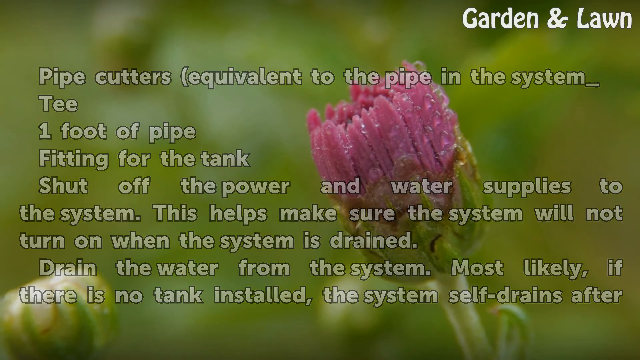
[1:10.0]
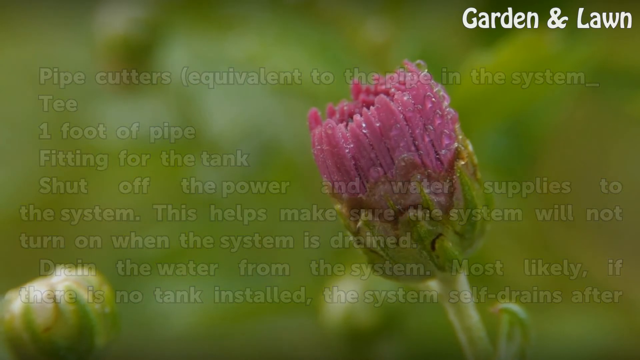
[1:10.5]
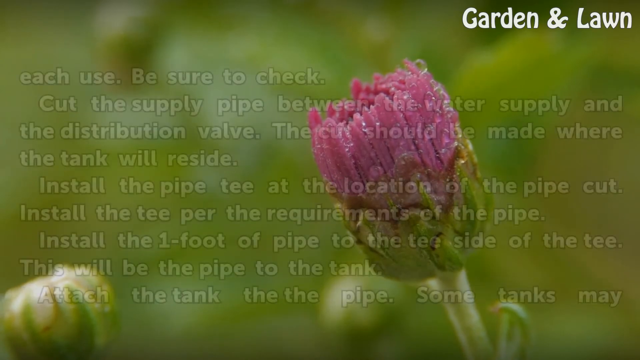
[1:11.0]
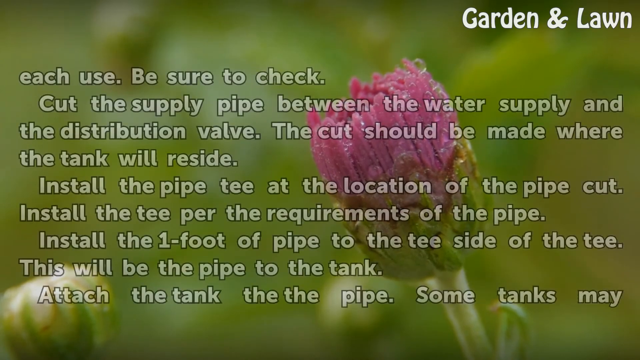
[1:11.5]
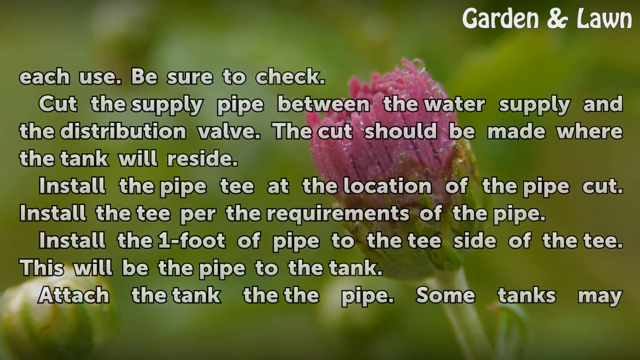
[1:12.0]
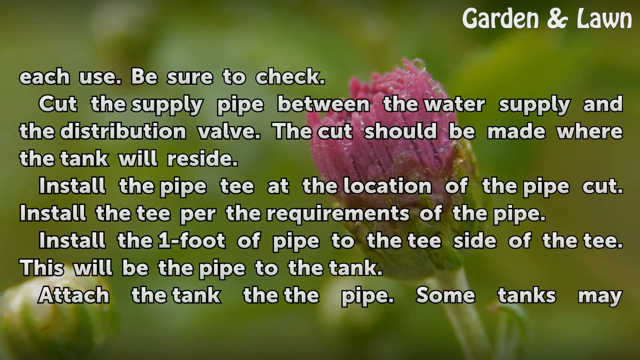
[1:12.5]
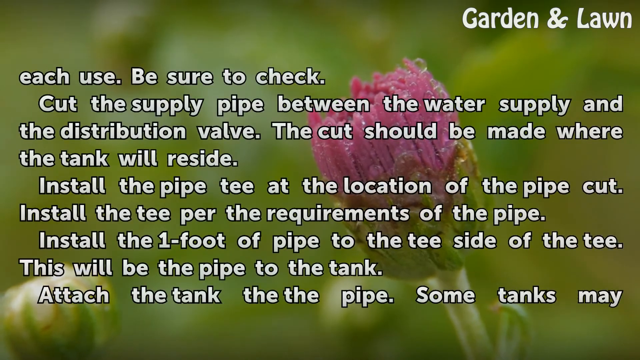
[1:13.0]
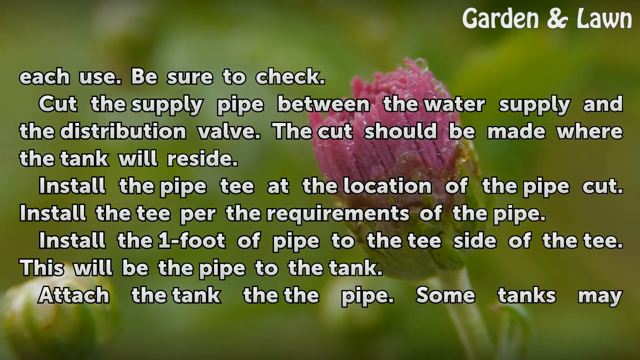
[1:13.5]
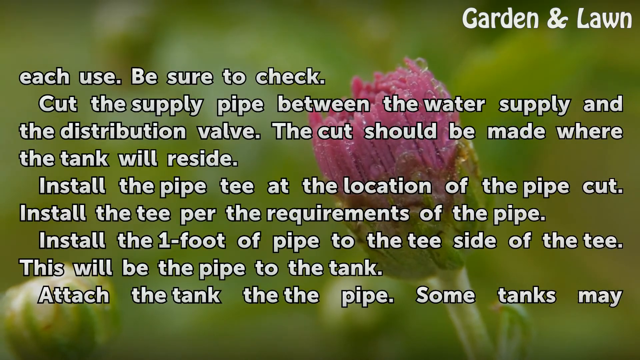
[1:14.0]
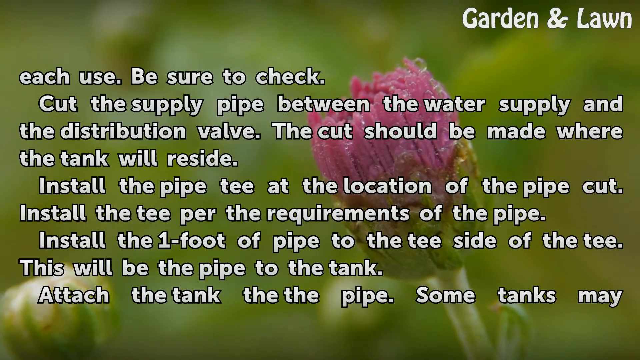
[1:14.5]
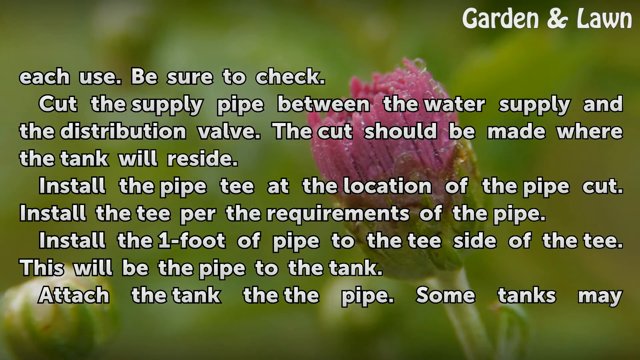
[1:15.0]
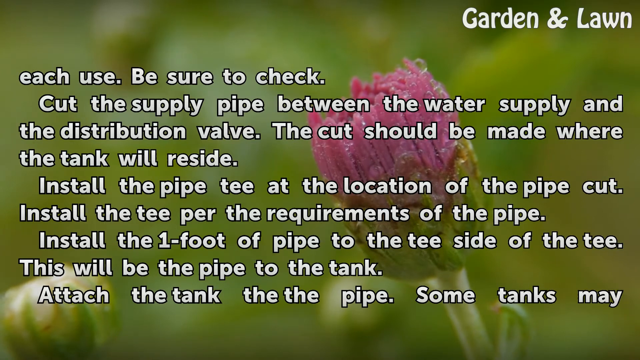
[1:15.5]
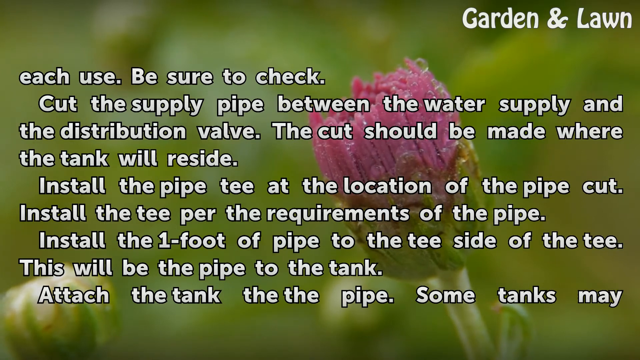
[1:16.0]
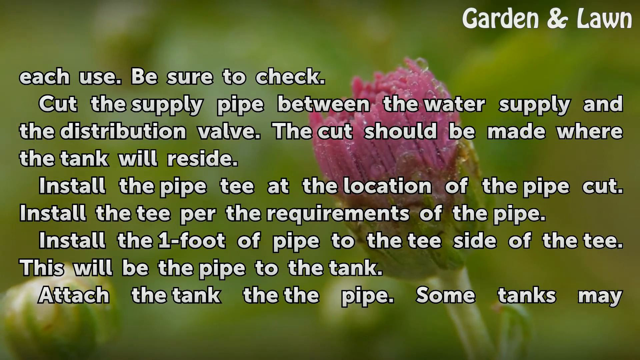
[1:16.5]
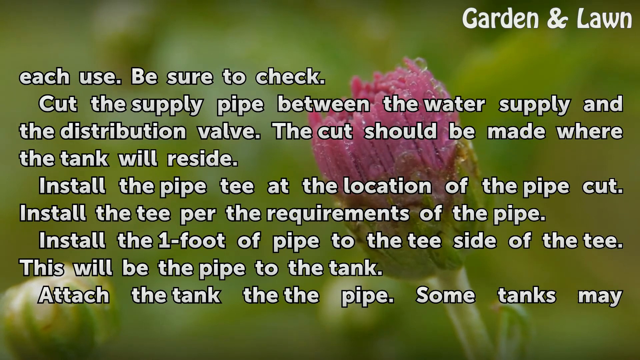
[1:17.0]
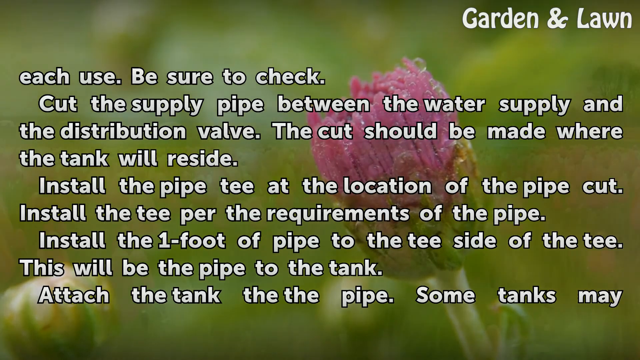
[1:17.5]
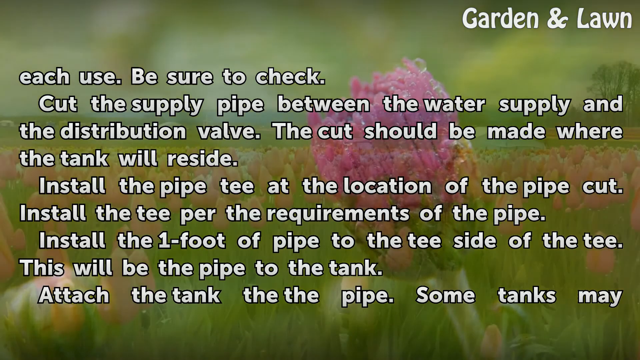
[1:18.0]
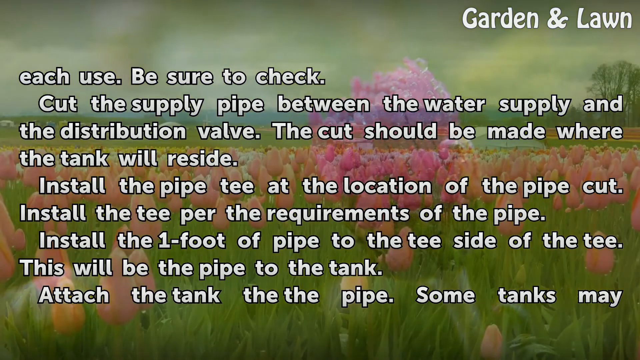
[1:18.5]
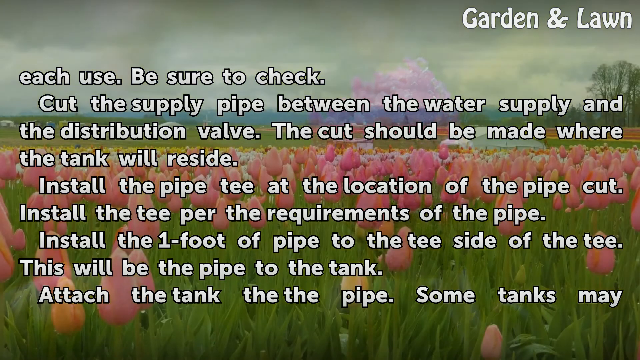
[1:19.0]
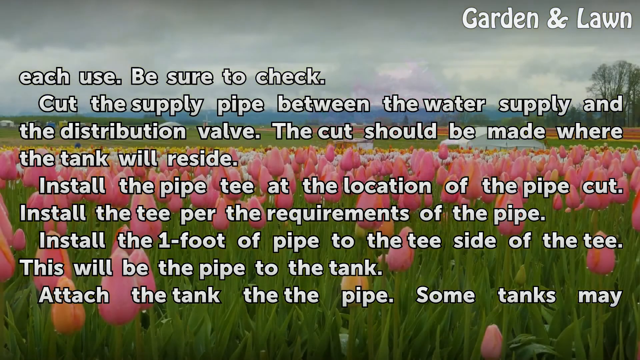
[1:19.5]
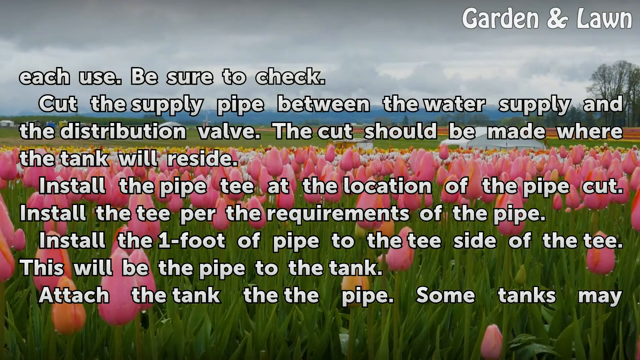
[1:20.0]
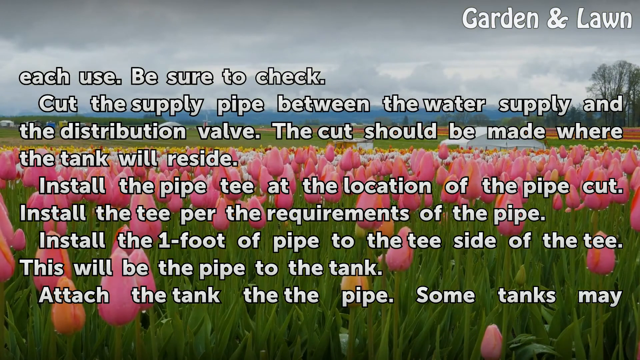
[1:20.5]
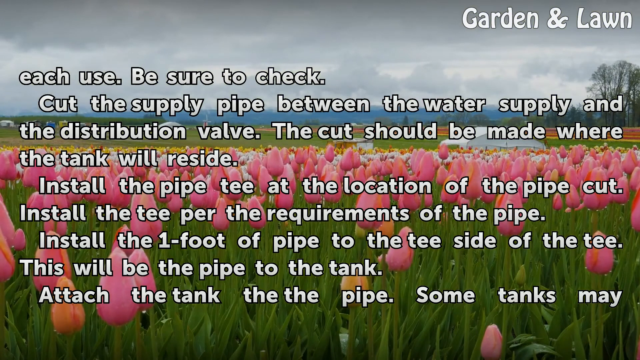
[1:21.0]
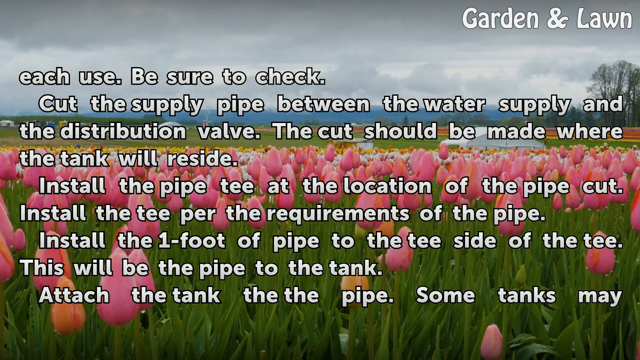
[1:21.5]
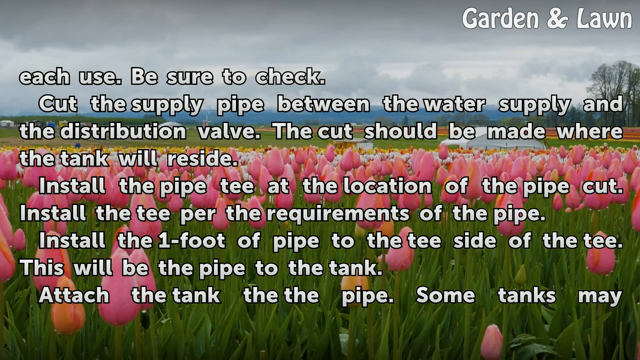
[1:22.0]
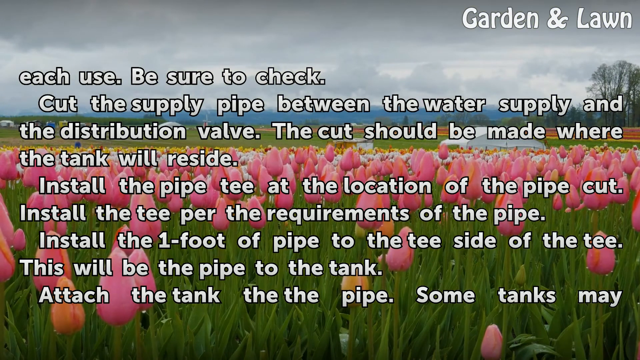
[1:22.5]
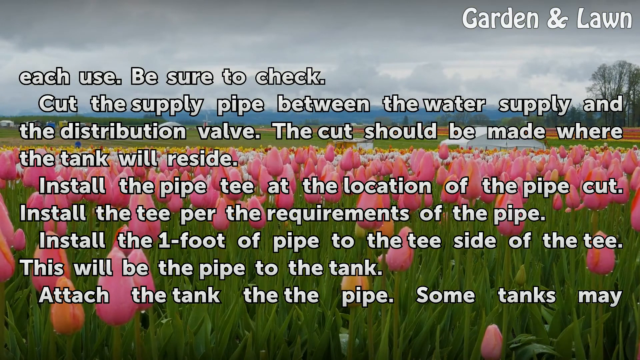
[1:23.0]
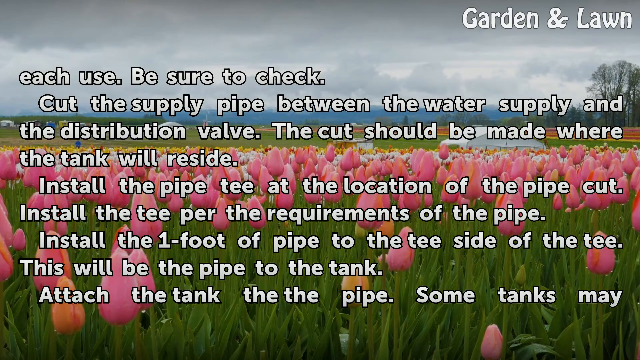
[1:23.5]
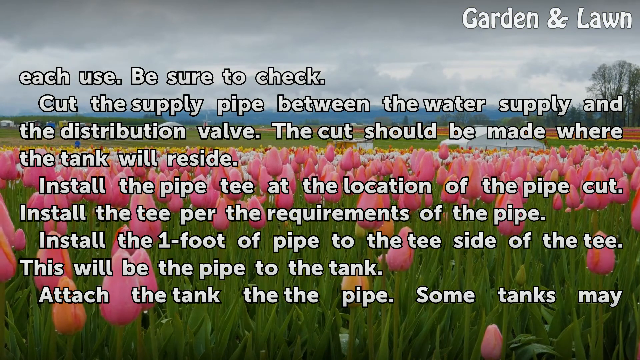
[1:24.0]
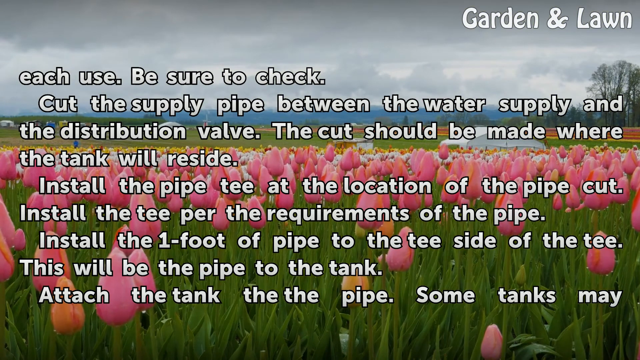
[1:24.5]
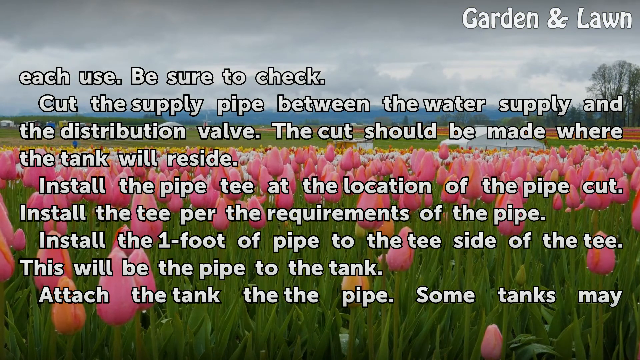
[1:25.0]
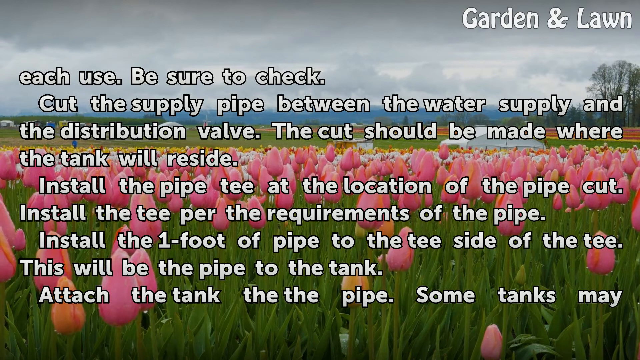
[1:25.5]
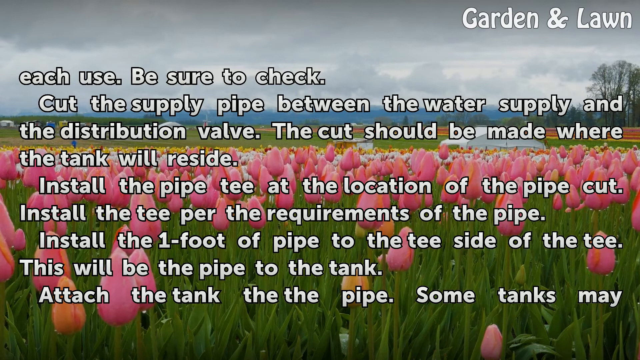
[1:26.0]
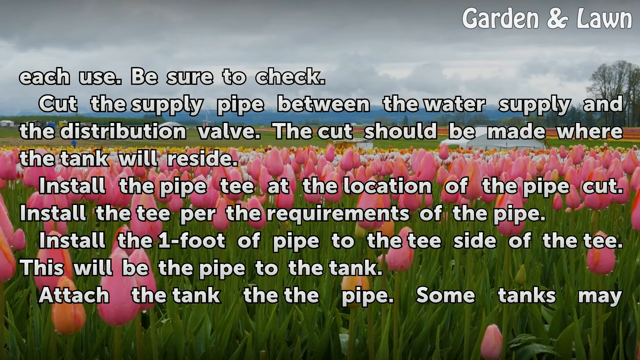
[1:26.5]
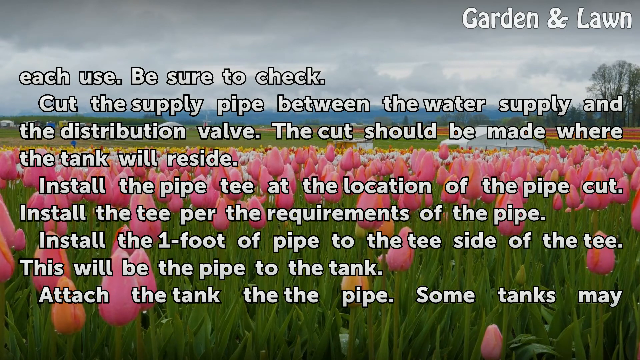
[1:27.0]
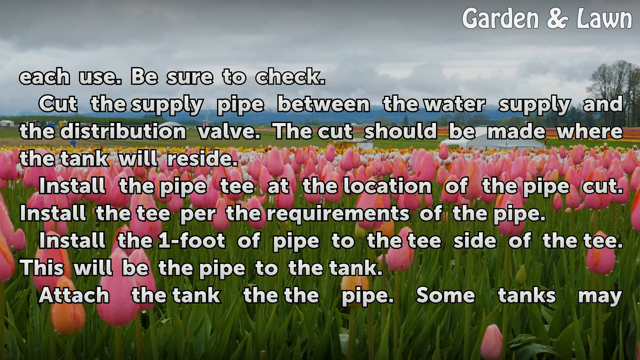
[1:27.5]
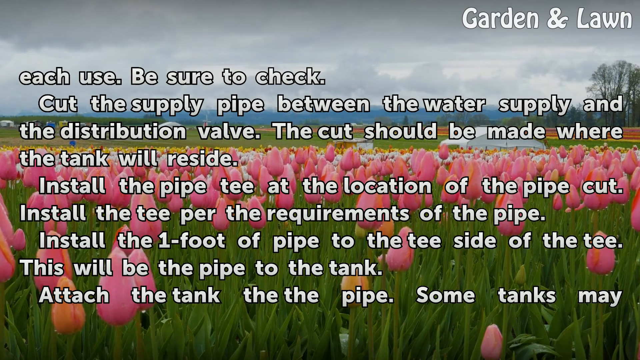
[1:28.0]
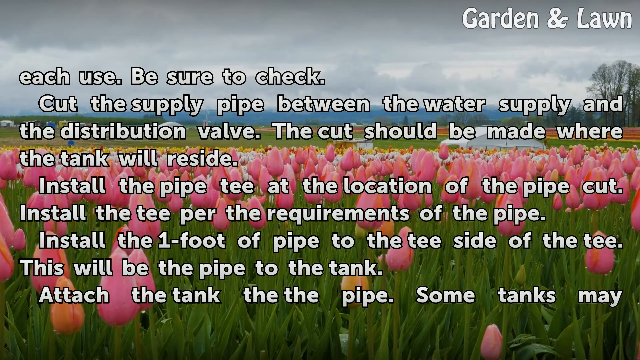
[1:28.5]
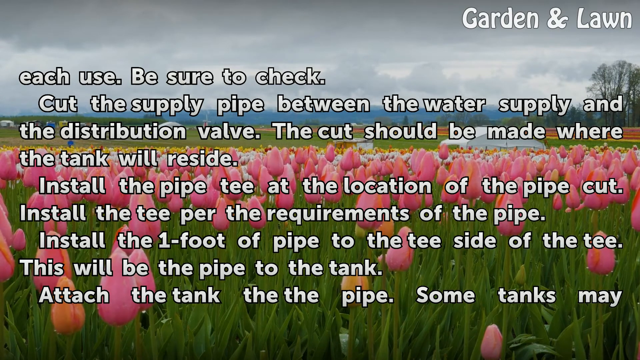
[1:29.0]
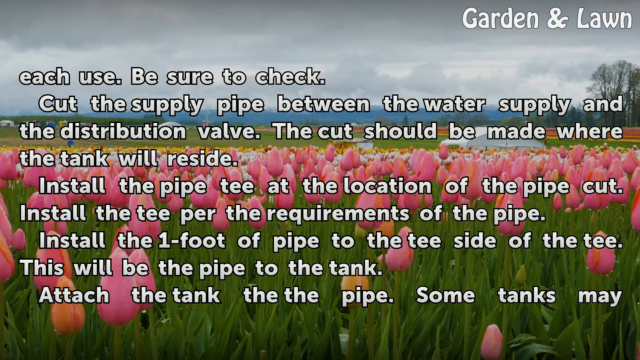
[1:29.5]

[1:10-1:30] The list of items needed and the instructions are on screen, then fade, showing the individual flower head with pink petals in a tight bunch on the stem. The instructions continue: "each use be sure to check cut the supply pipe between the water supply and the distribution valve. The cut should be made where the tank will reside. Install the pipe T at the location of the pipe cut. Install the T per the requirements of the pipe. Install the one foot of pipe to the T side of the T. This will be the pipe to the tank. Attach the tank to the pipe. Some tanks may". The background changes to a field of tulips, with pink tulips in the foreground and paler peach tulips and white tulips in the background, swaying in the breeze.